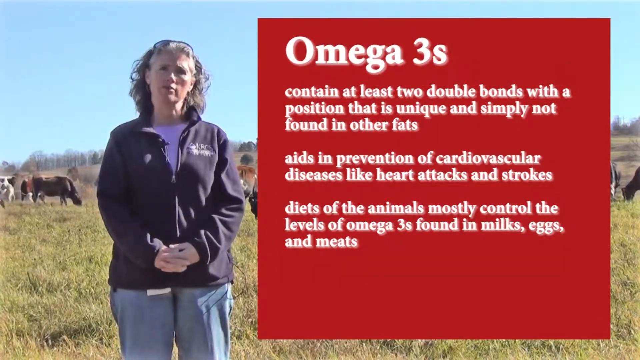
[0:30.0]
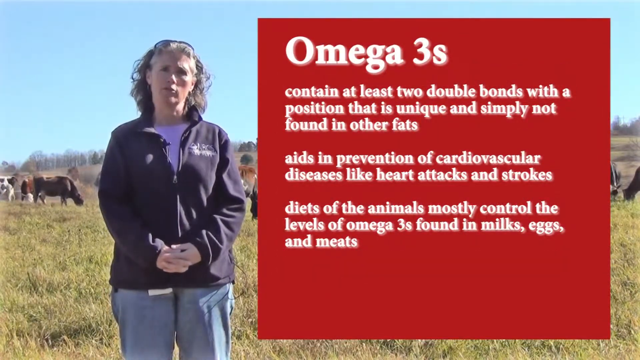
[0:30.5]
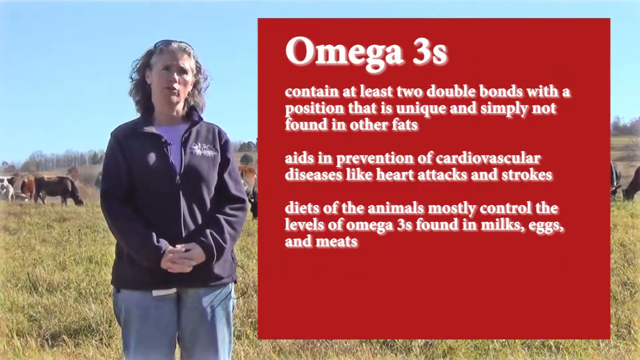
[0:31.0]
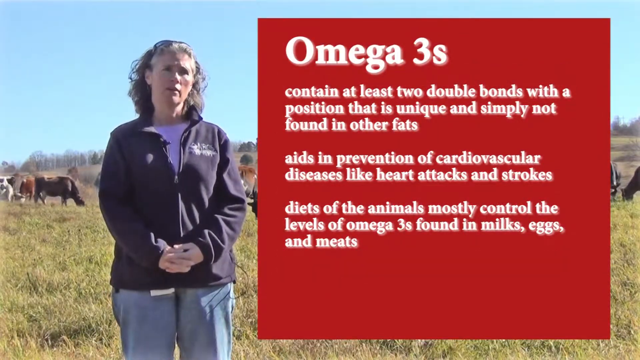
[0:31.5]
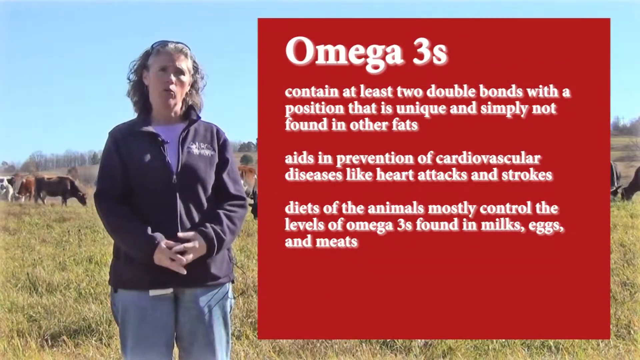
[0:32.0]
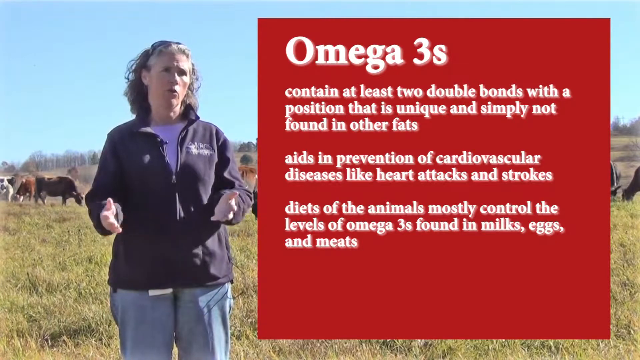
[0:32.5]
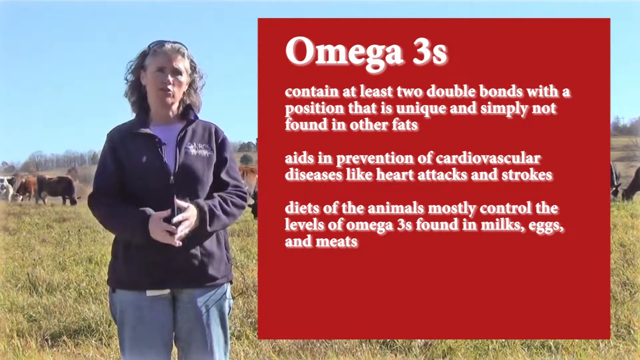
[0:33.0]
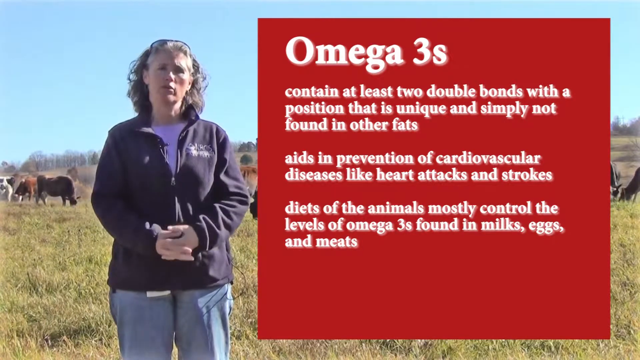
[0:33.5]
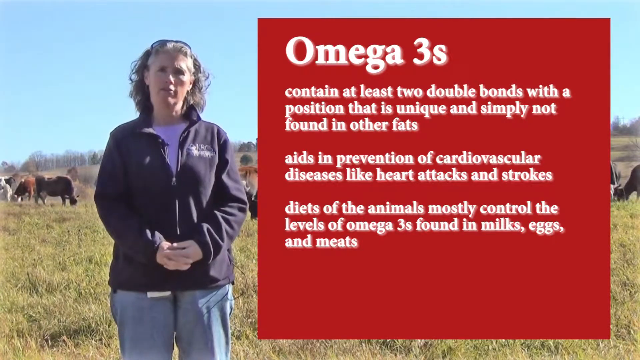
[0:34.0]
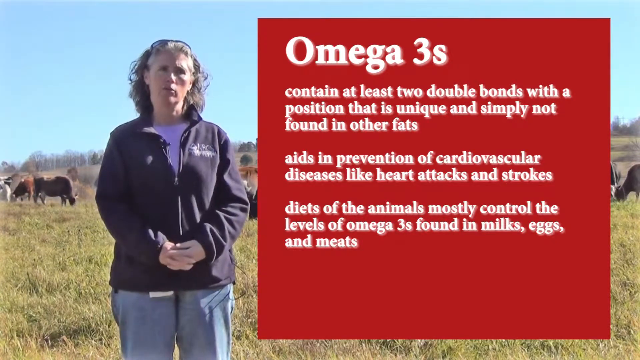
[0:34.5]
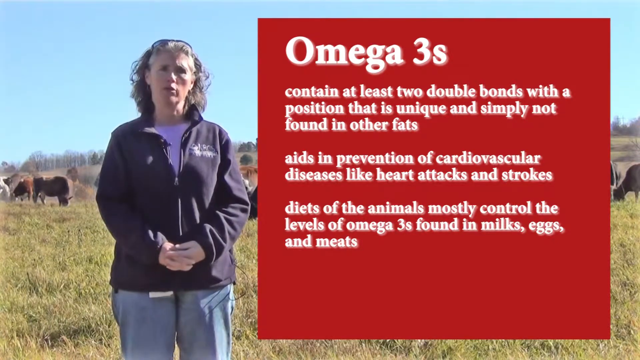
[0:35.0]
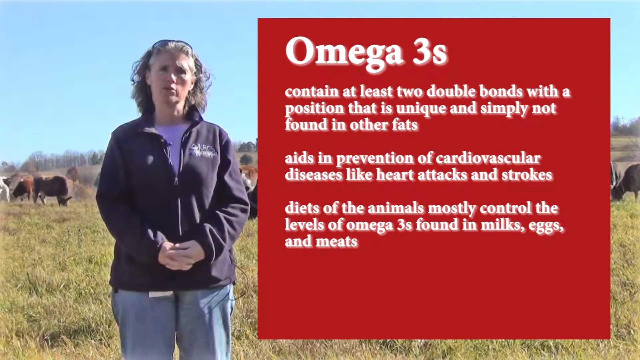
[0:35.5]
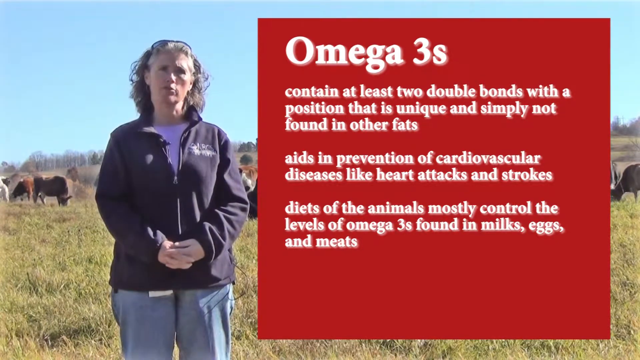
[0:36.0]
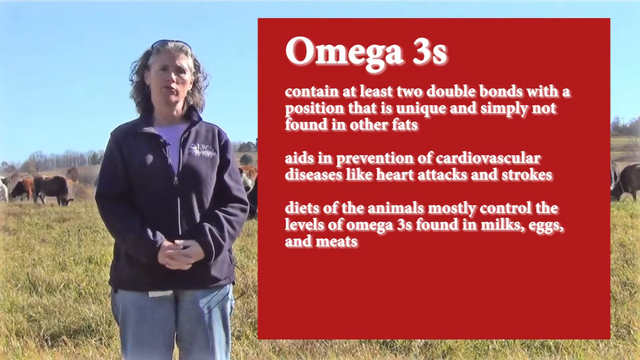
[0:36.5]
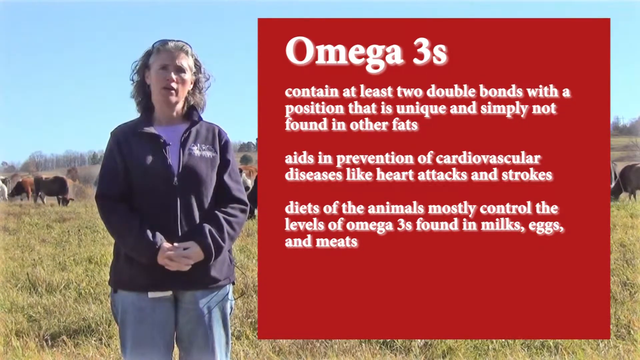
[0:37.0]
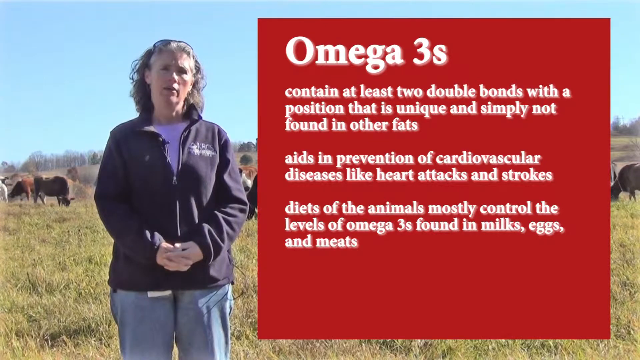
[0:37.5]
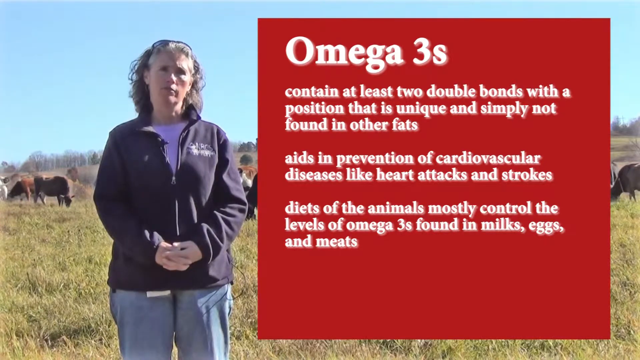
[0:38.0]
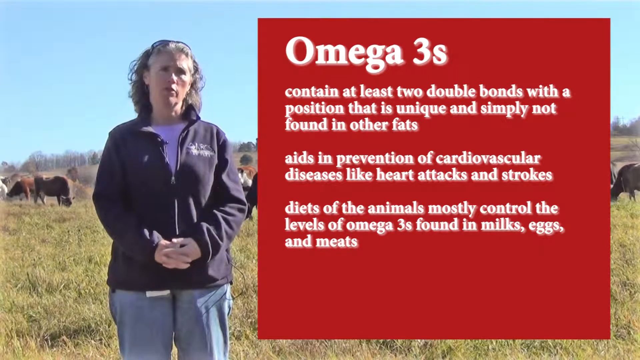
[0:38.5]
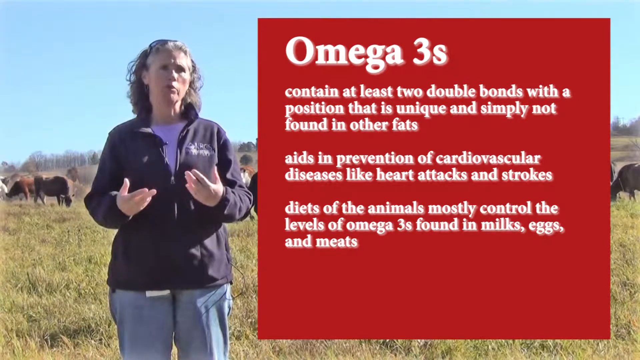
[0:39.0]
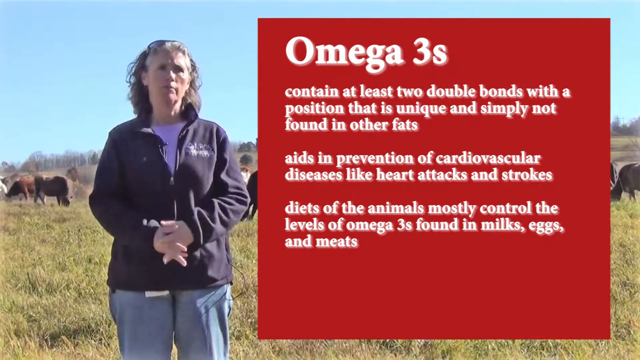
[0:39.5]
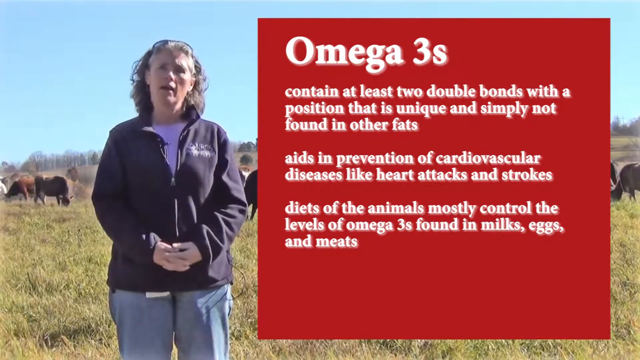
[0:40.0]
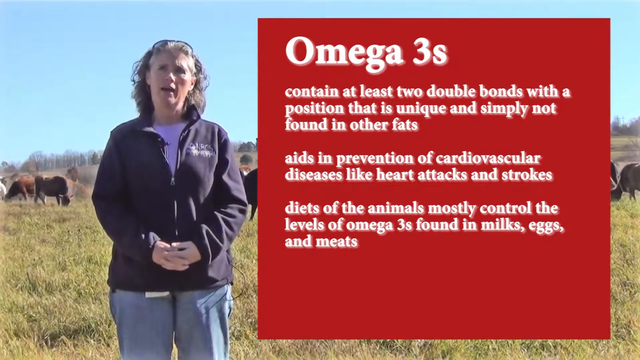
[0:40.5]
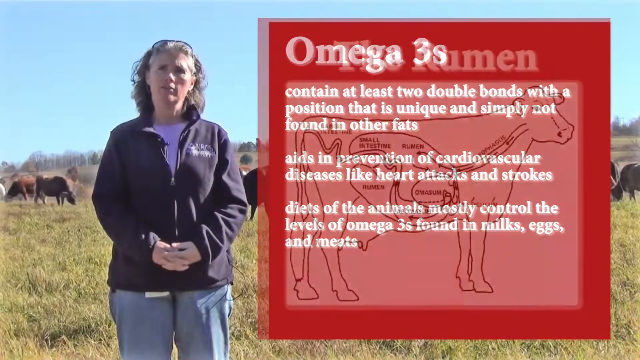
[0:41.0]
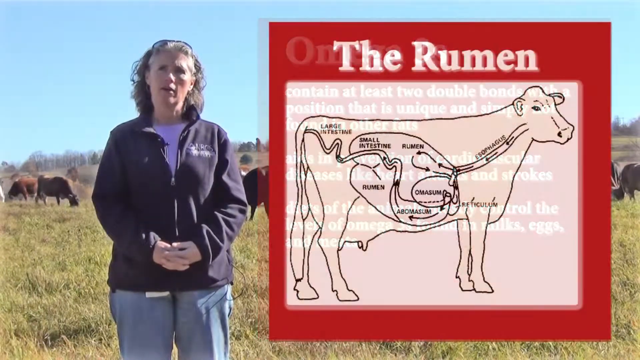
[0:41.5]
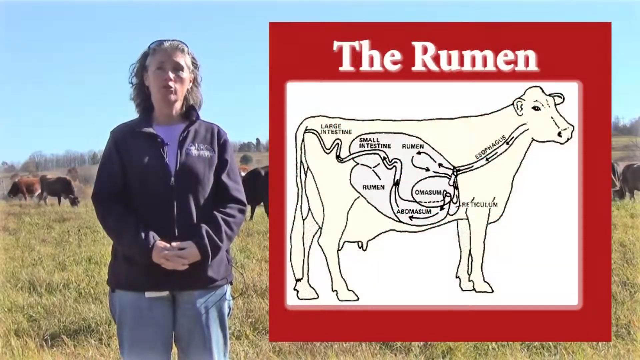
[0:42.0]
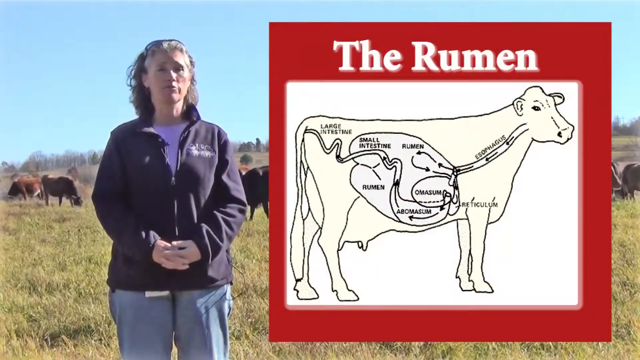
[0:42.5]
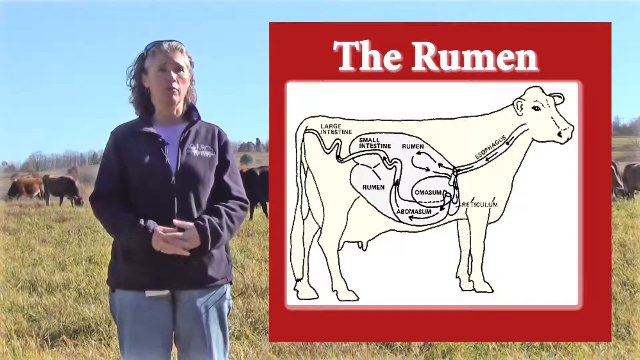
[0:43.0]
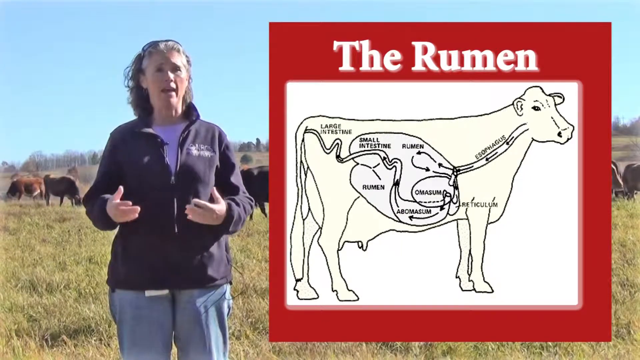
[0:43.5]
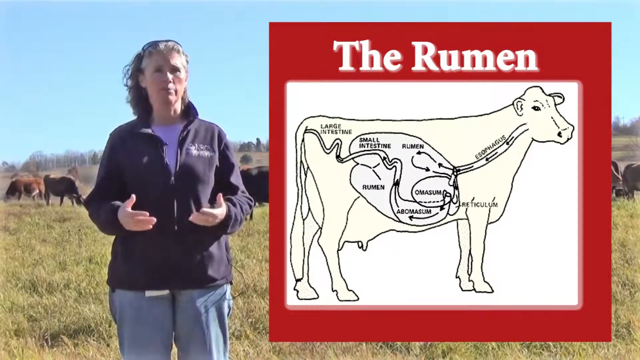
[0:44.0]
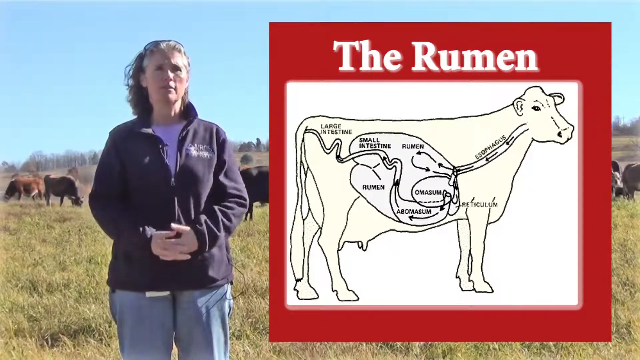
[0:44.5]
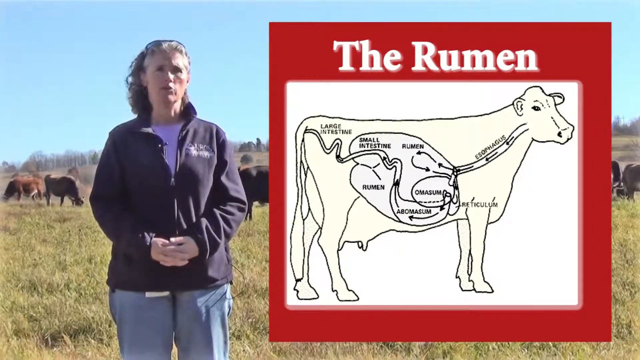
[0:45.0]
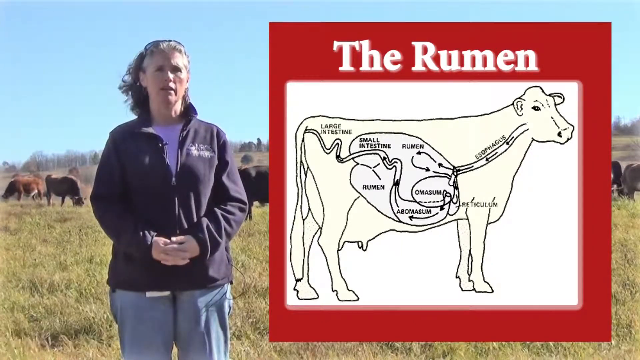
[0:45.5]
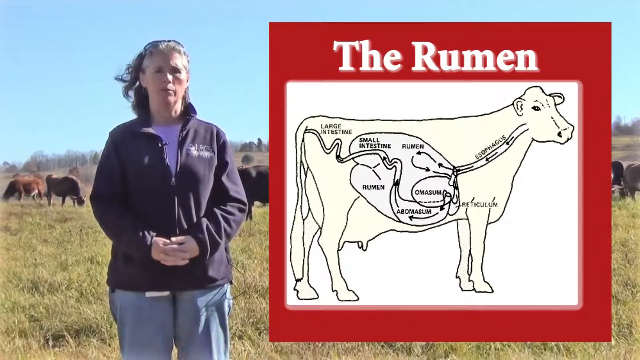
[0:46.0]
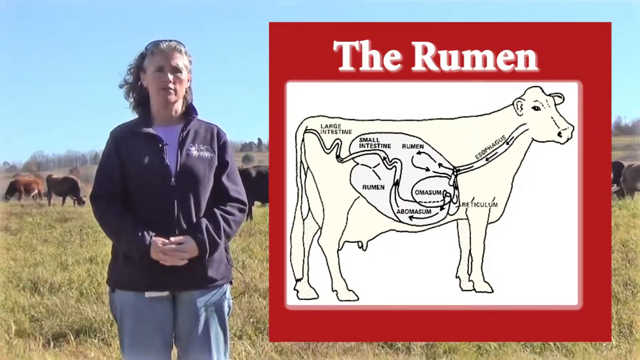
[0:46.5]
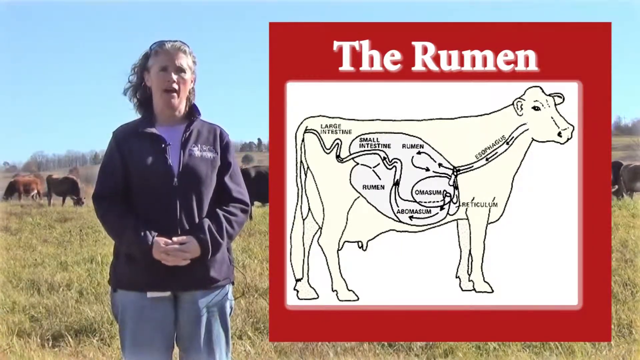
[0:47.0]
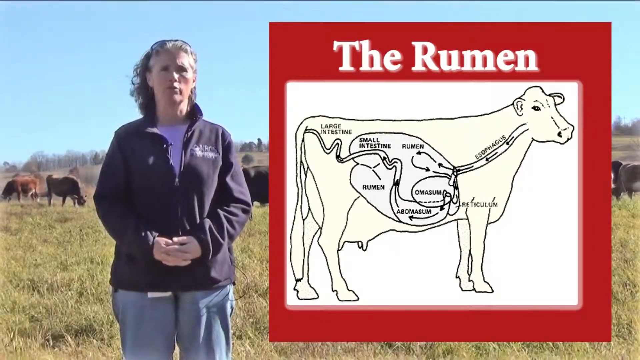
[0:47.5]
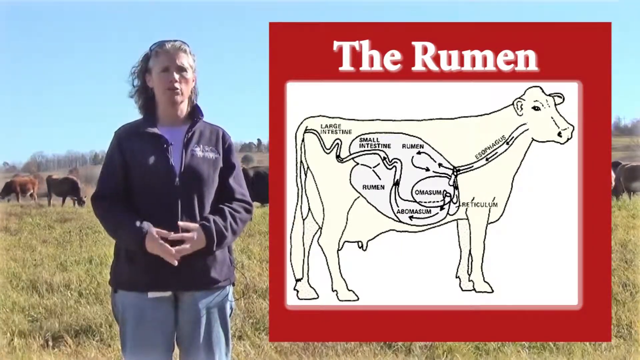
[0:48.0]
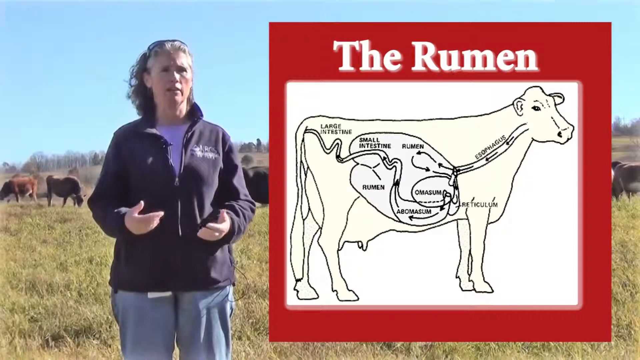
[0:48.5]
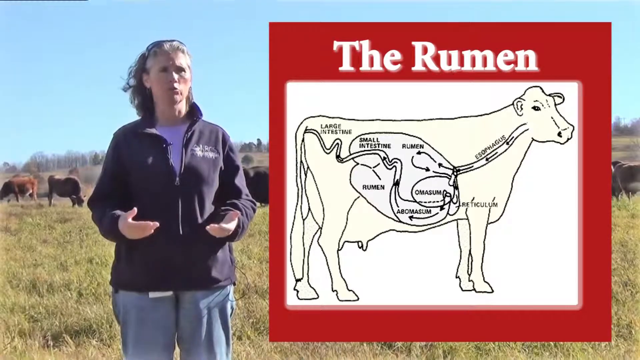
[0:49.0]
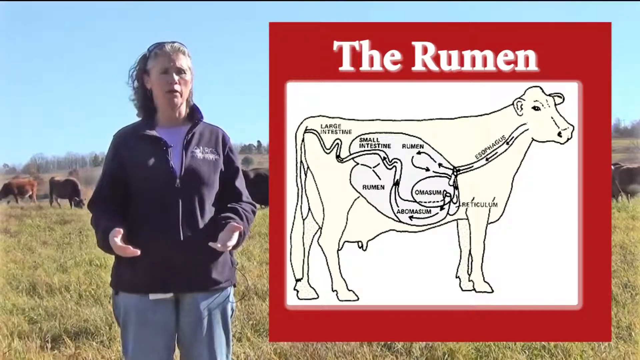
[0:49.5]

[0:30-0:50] The woman wears a black jacket and has long blonde fringed hair. She stands on the pasture, and behind her dairy cattle are feeding or grazing on the grass. A note then appears about omega-3s, saying they contain a double bond in a unique position not found in other fats, that they aid in preventing cardiovascular diseases like heart attacks and strokes, and that the animal's diet controls the level of omega-3s found in milk, eggs and meat. The woman presents these as nutrients that can be added to an animal's diet to benefit the health of dairy cattle. A diagram of a cow's digestive system follows, showing its four stomachs, including the rumen, abomasum and reticulum, along with the esophagus, the small intestine and the large intestine. Arrows point from the esophagus down to the rumen, abomasum and reticulum and out to the intestine and the large intestine.